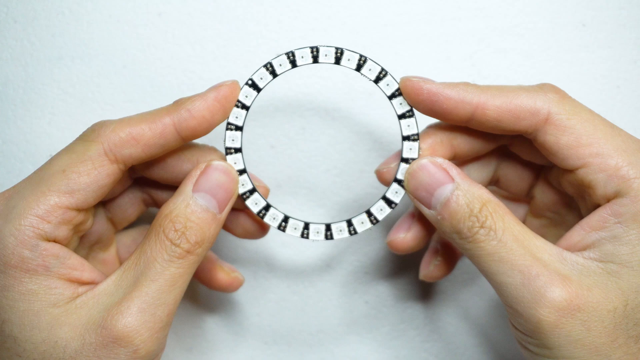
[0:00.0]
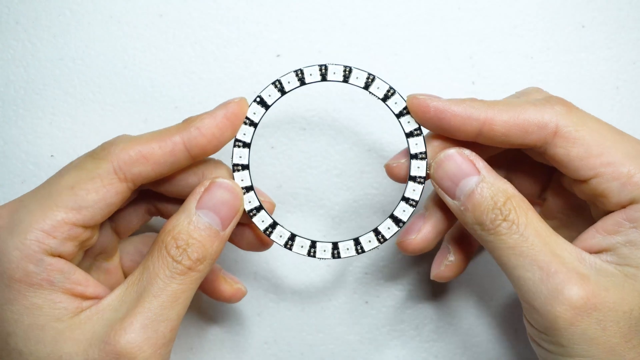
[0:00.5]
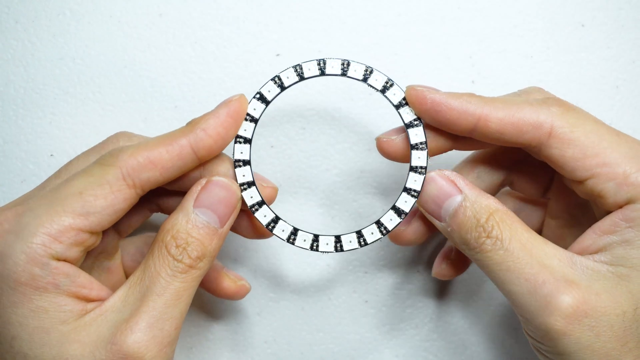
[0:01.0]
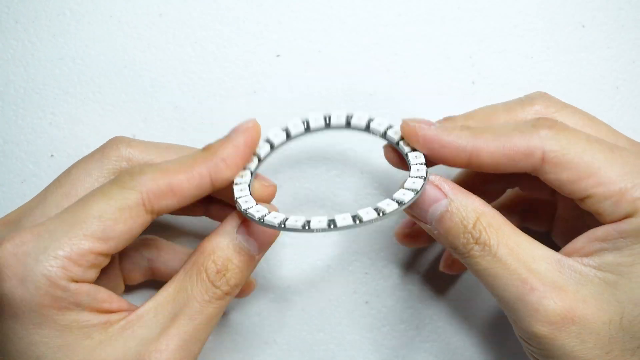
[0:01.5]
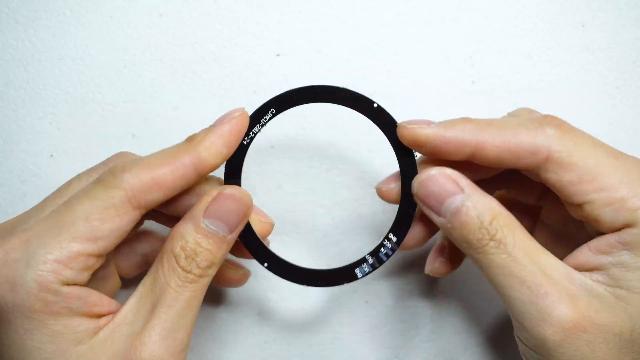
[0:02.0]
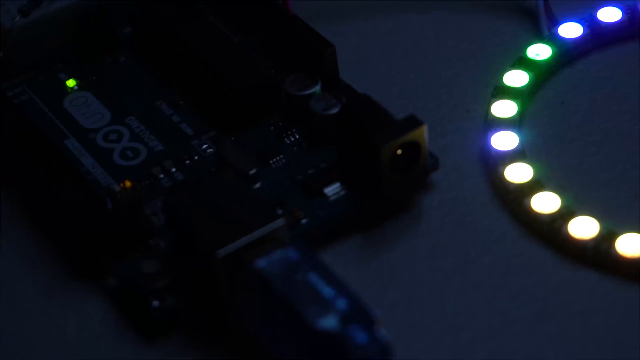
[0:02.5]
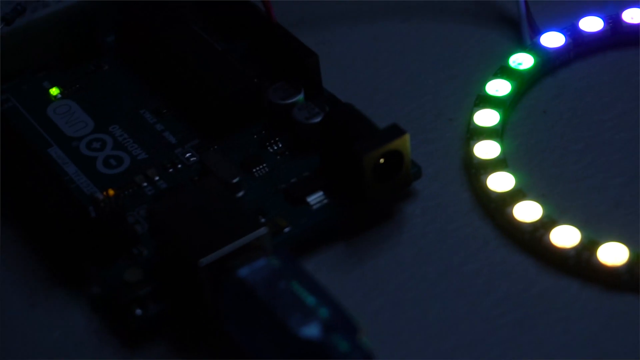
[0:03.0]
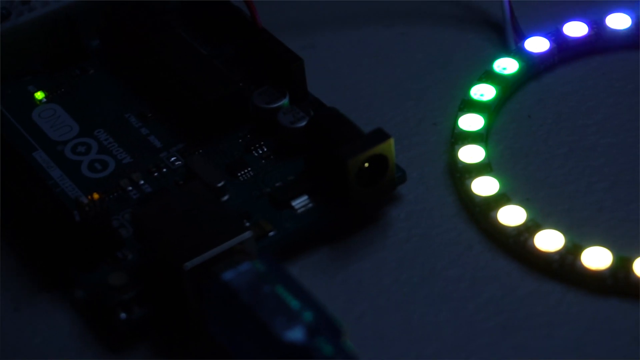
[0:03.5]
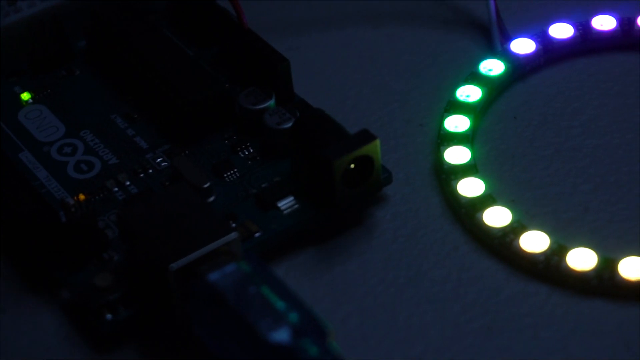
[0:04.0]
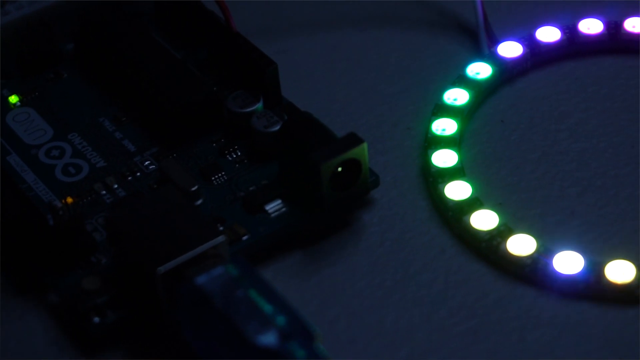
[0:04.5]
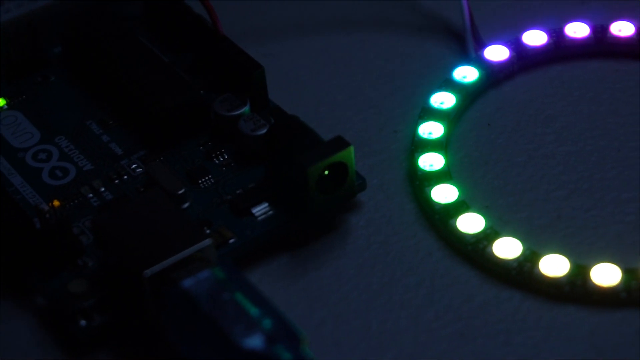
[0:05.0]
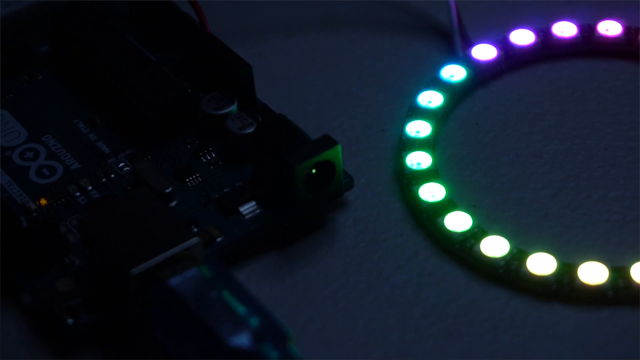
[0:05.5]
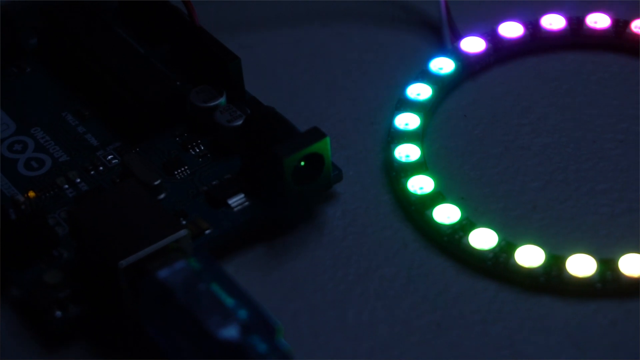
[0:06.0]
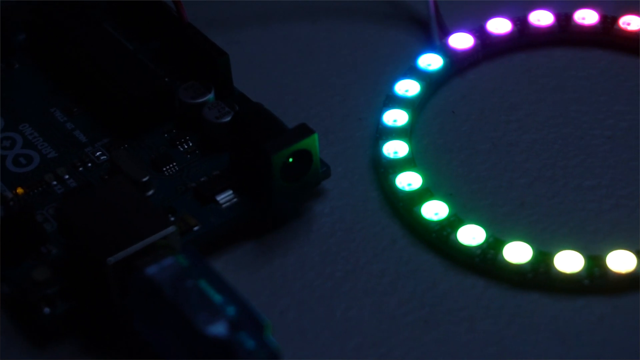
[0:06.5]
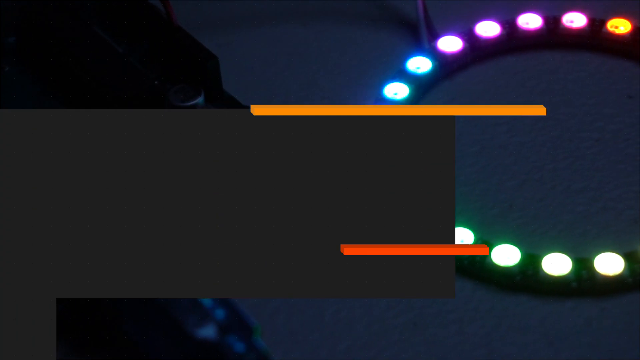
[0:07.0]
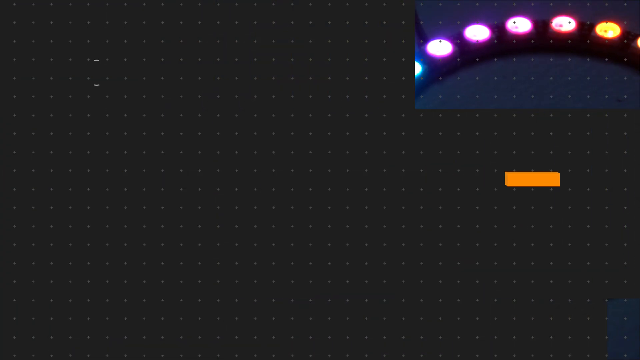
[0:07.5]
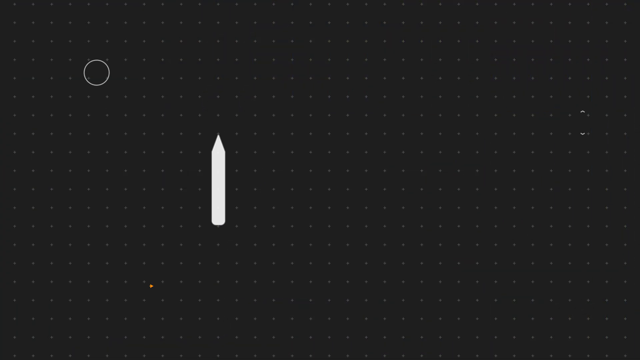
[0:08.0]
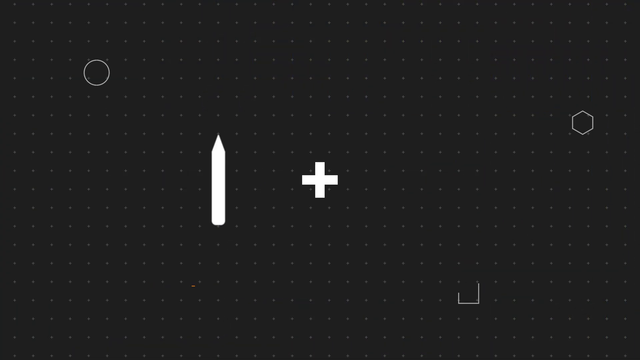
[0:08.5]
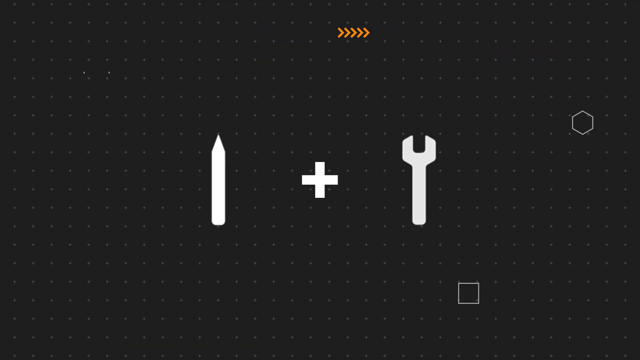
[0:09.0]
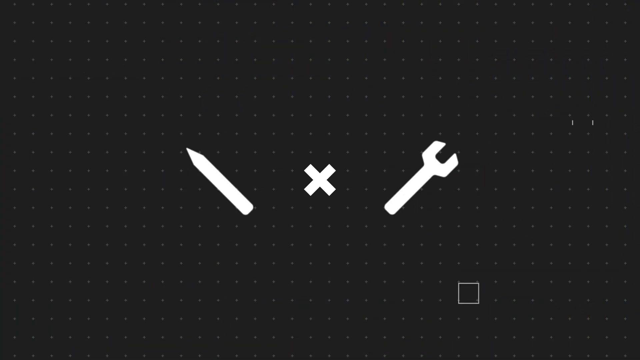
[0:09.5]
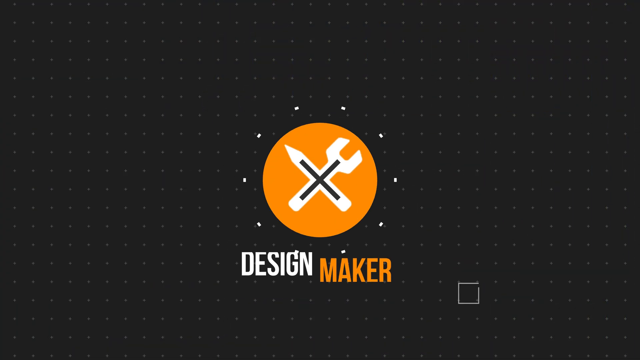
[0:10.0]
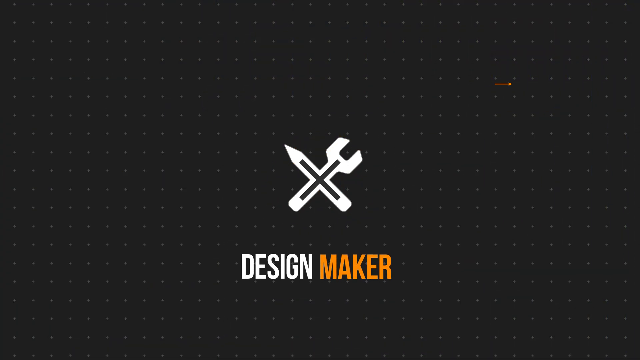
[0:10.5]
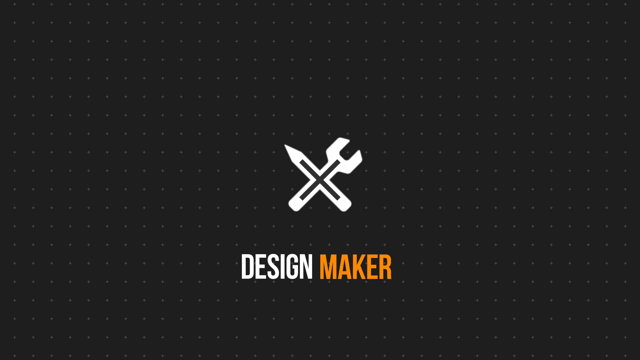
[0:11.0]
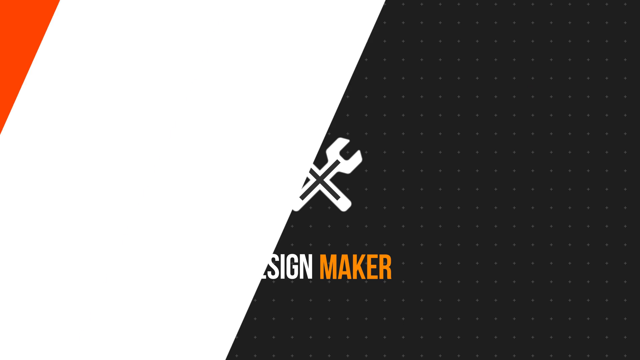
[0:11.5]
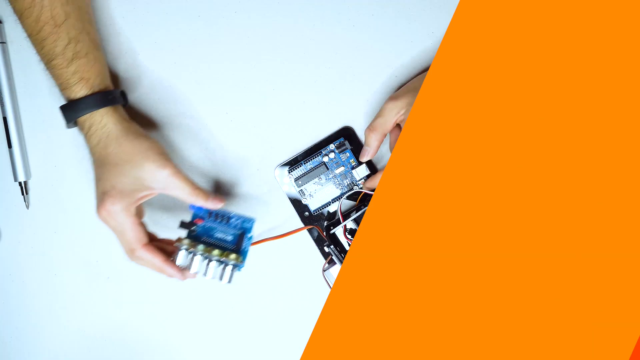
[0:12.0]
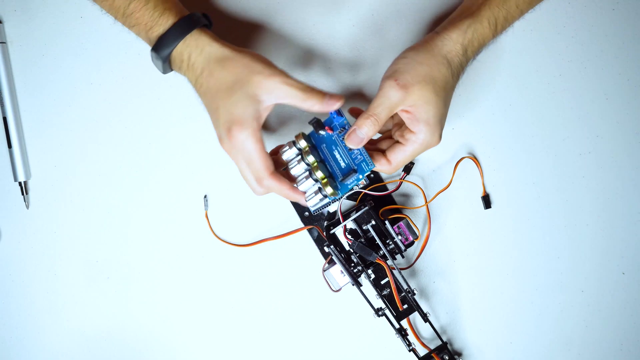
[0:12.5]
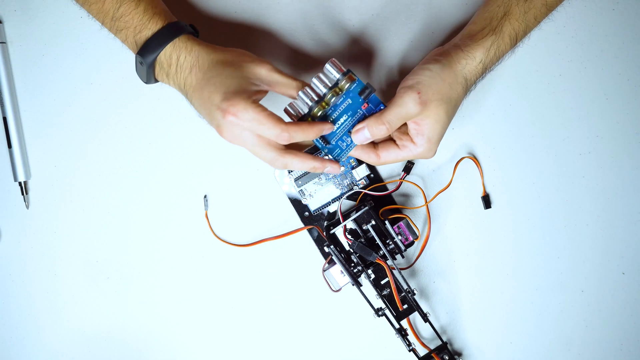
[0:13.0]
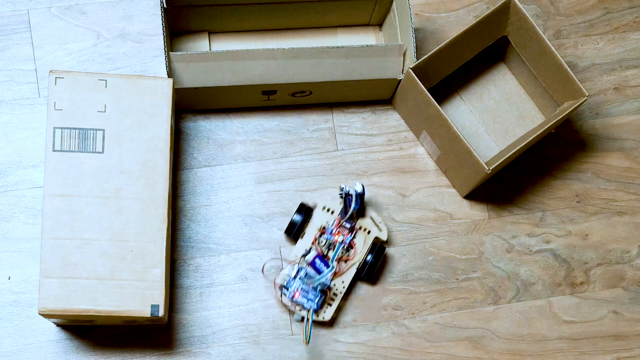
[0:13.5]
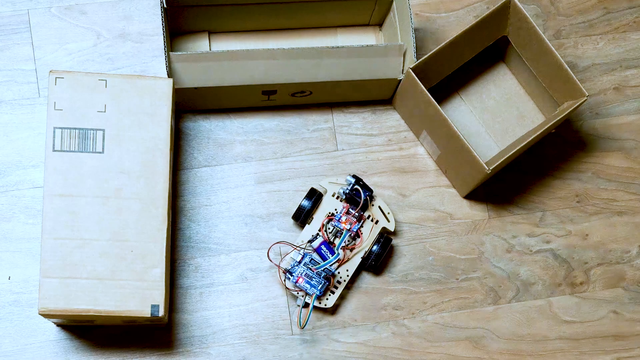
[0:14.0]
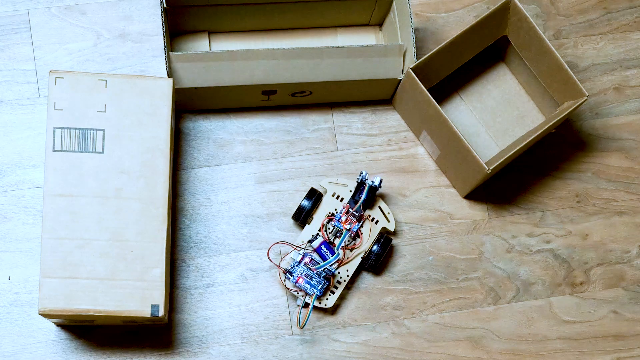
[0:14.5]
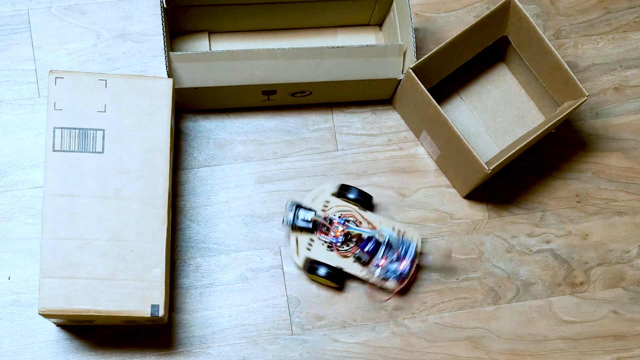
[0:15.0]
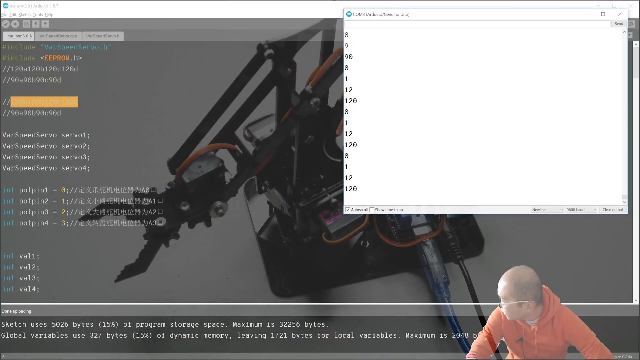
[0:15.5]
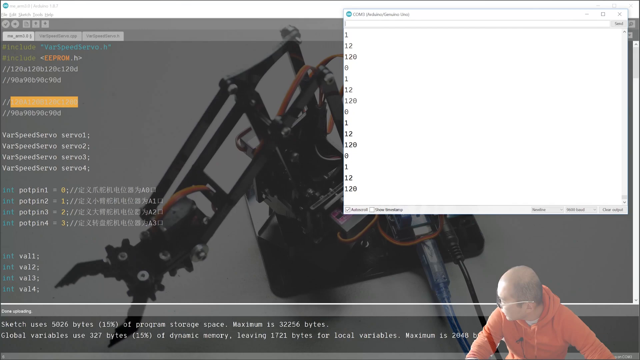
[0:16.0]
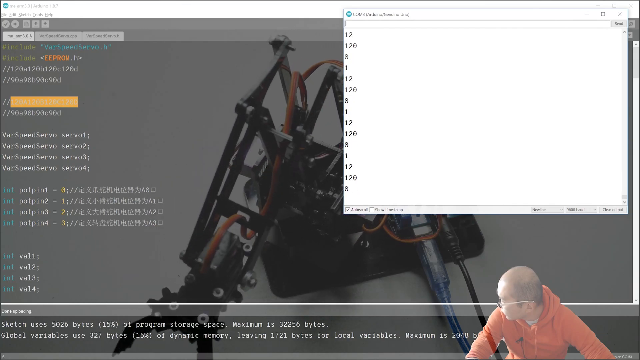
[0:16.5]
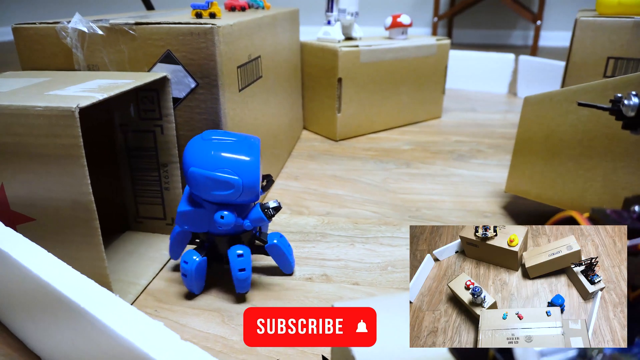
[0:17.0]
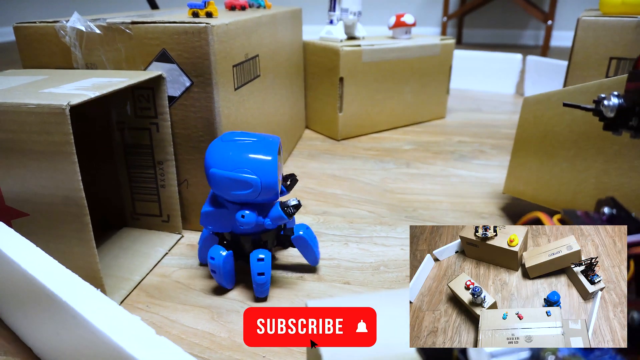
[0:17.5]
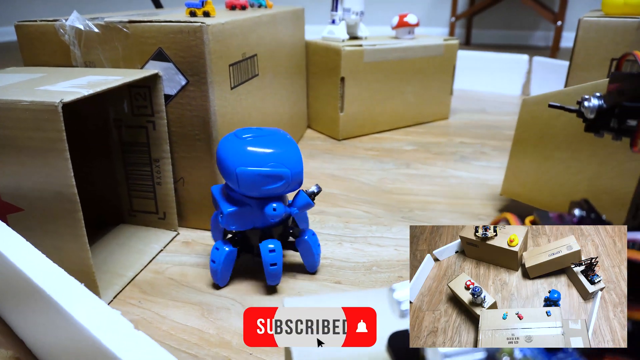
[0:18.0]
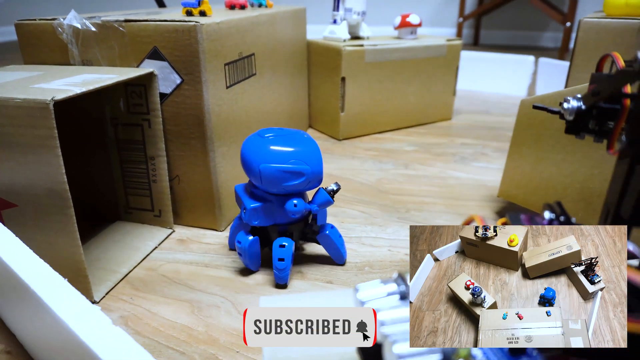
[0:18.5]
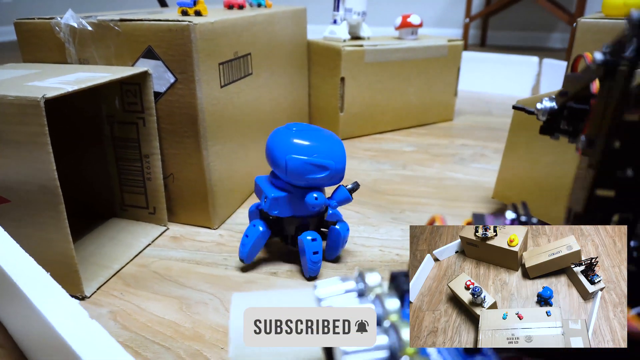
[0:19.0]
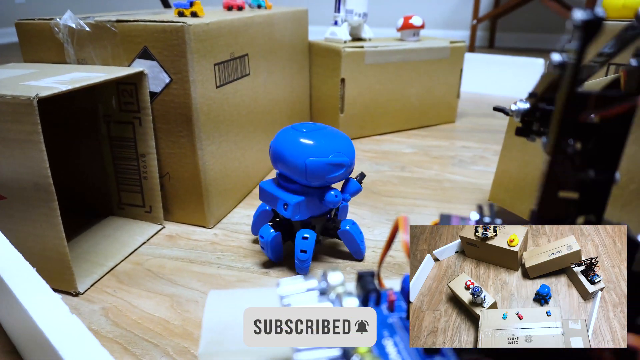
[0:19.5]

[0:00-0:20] A close-up, first-person point of view shows someone holding a circular object with both hands against a white gradient background. The person's hand is white, and the object is circular, roughly half the size of the hand, hollow, and patterned in black and white. They flip the object around with their fingers, revealing a solid black outside. The video transitions to a close-up of what appears to be a walkie-talkie of some sort on the left and a glowing neon light circle on the right; the scene is fairly dark, and the neon lights are the only source of light. Next comes an intro slide with a black background and white polka dots, where a pencil and a tool come together to form a logo, with text underneath in white and orange that says "Design Maker." Someone then holds batteries above a robot car. A robot car on a wood surface looks at several boxes that serve as obstacles, then turns around. The screen shows the robot's code in a Mac terminal with a transparent background through which the bot is visible in motion. Another slide shows a bigger, all-blue robot navigating its way around some cardboard boxes.